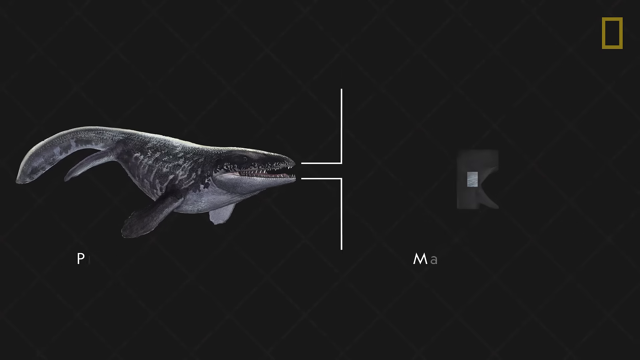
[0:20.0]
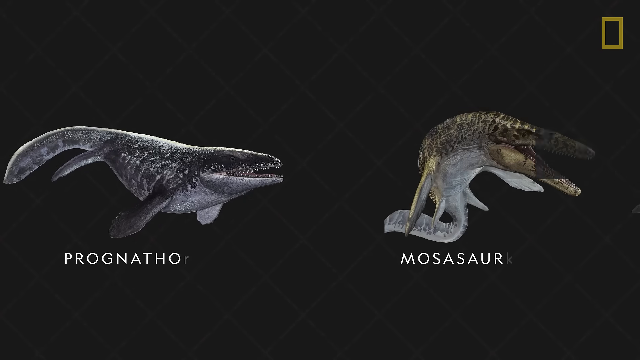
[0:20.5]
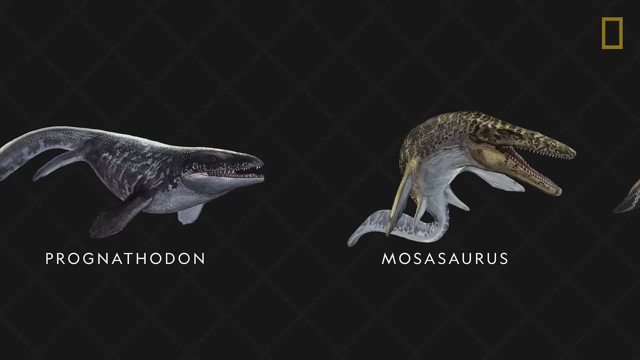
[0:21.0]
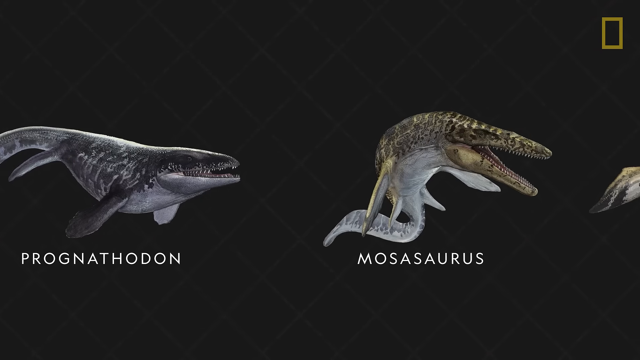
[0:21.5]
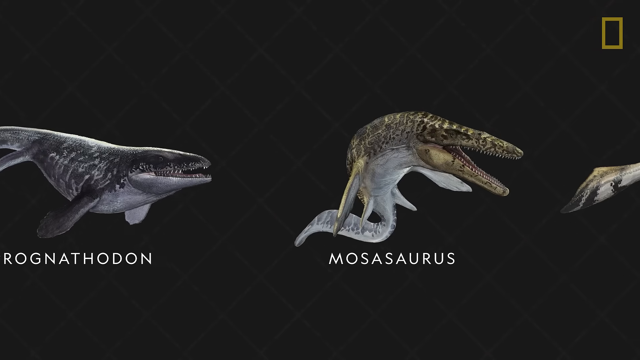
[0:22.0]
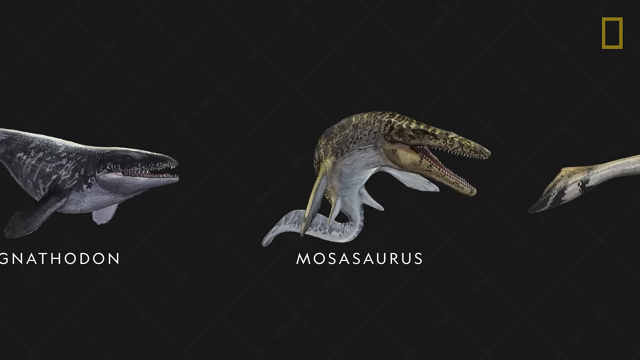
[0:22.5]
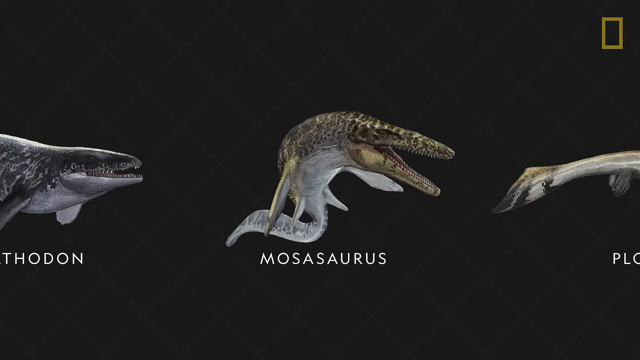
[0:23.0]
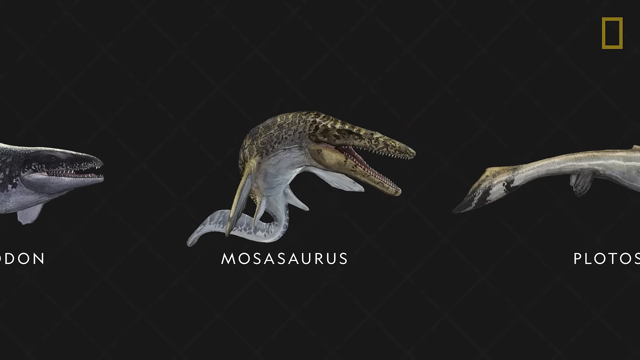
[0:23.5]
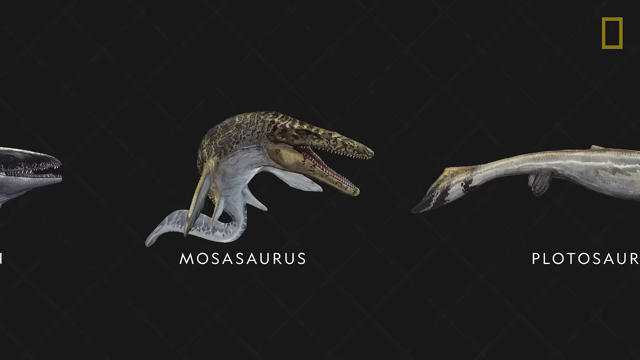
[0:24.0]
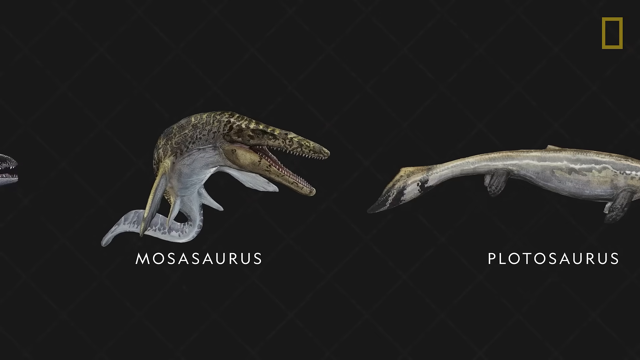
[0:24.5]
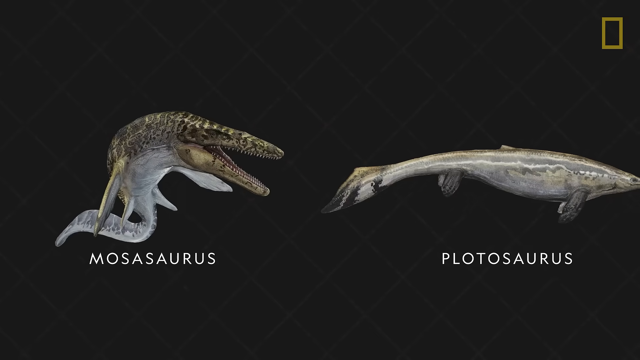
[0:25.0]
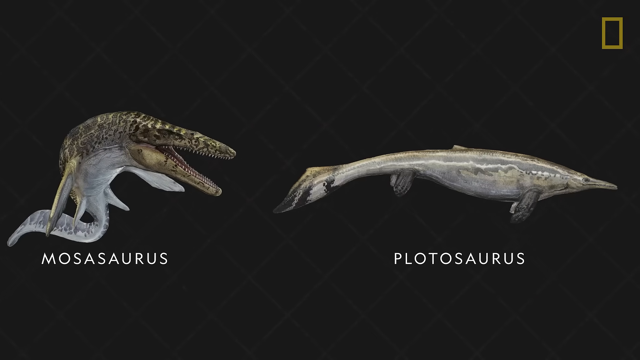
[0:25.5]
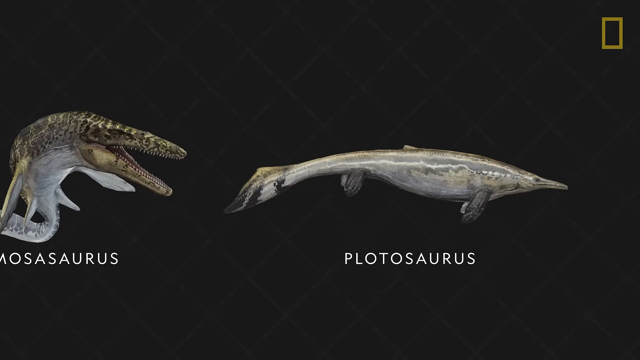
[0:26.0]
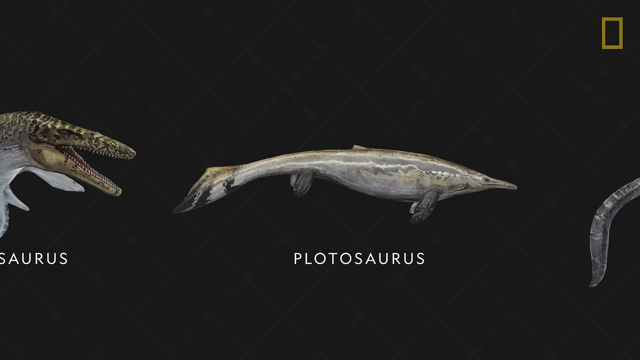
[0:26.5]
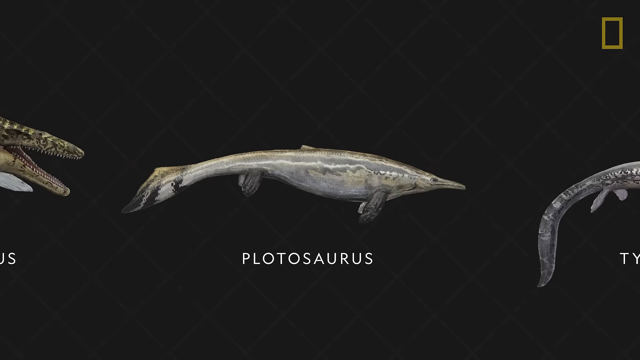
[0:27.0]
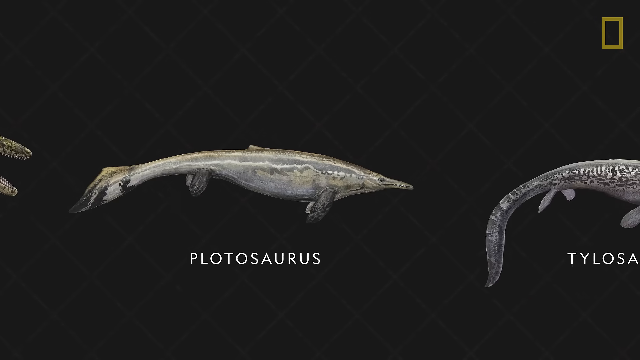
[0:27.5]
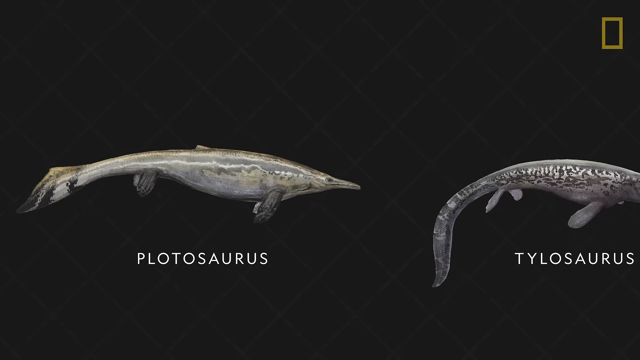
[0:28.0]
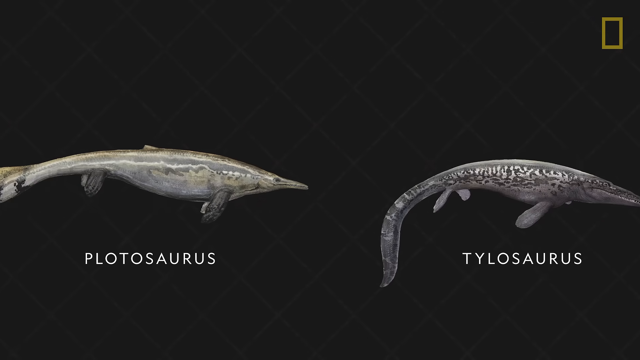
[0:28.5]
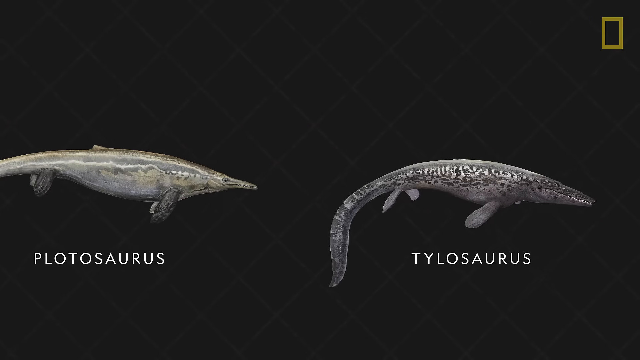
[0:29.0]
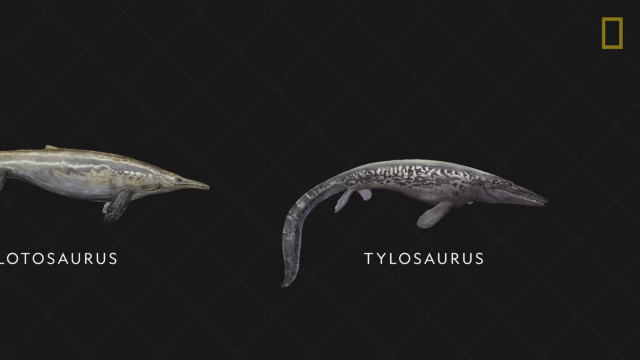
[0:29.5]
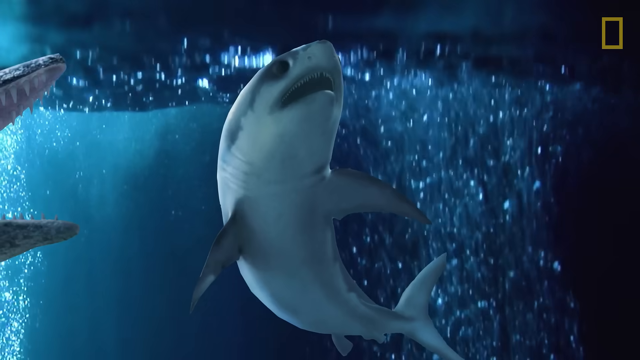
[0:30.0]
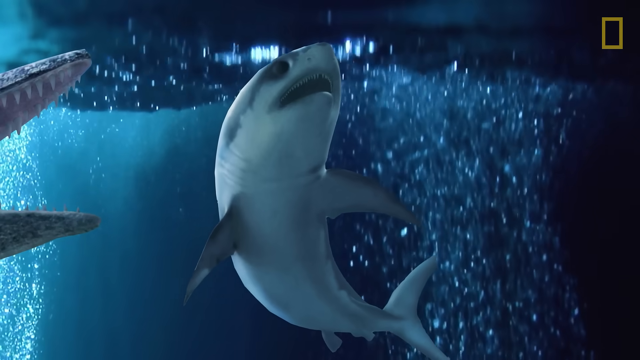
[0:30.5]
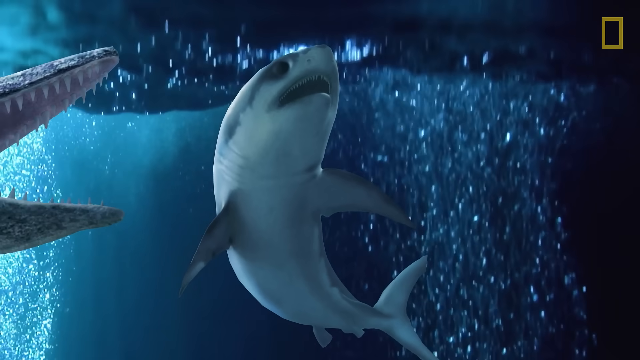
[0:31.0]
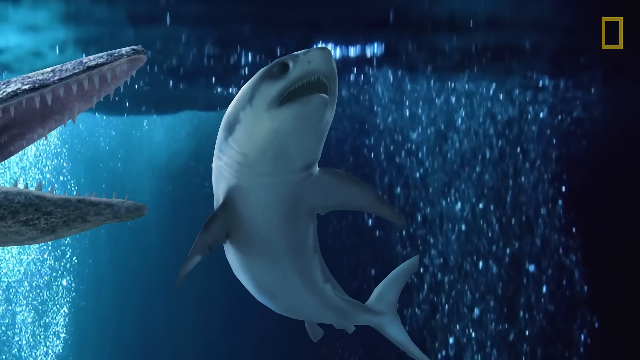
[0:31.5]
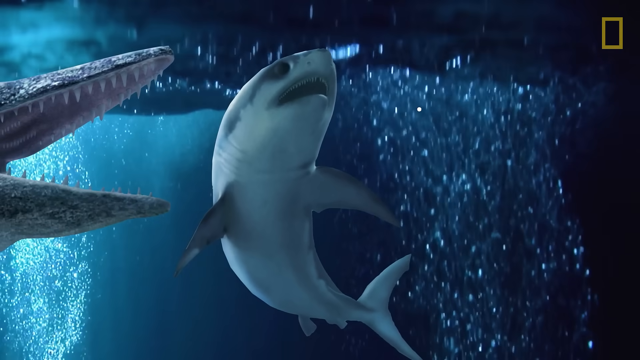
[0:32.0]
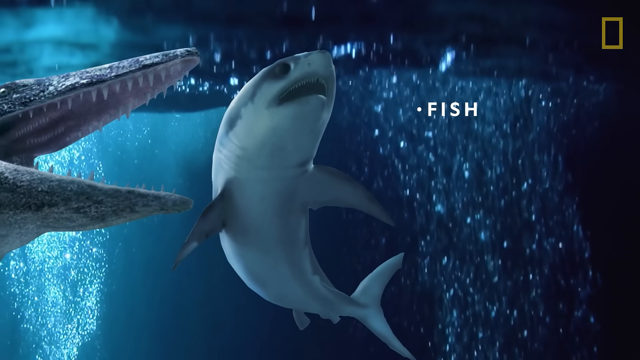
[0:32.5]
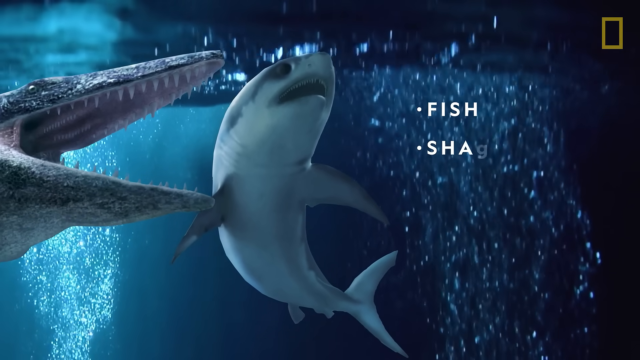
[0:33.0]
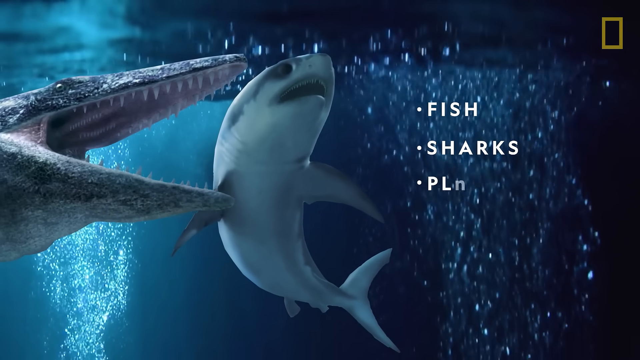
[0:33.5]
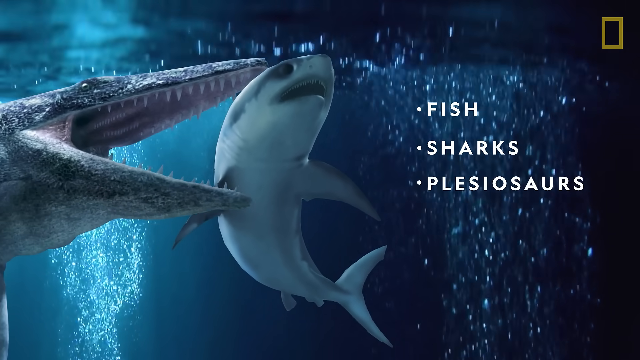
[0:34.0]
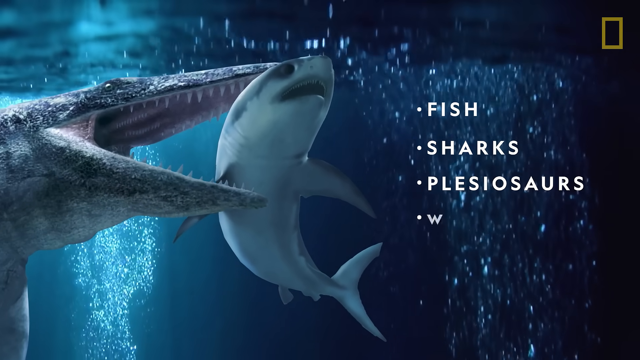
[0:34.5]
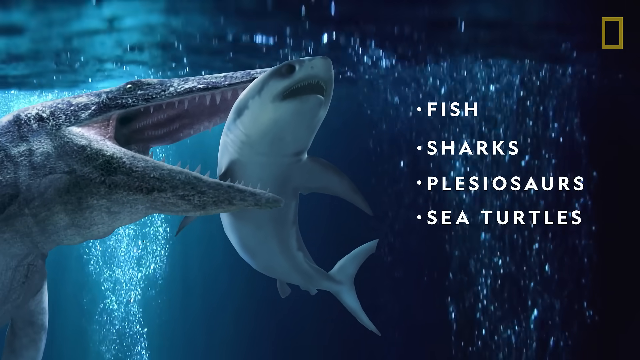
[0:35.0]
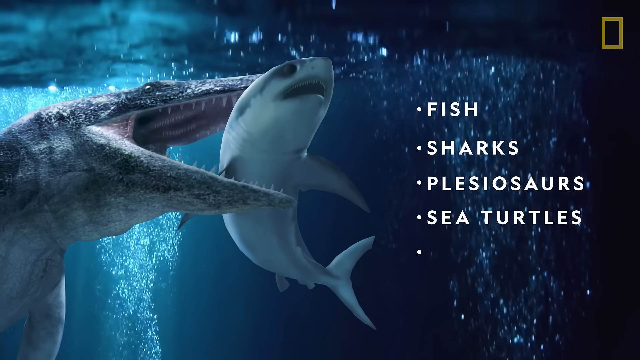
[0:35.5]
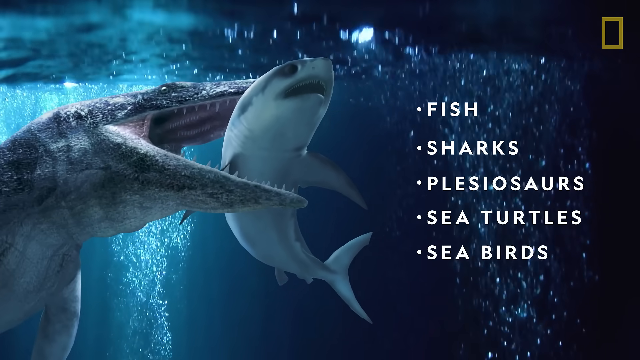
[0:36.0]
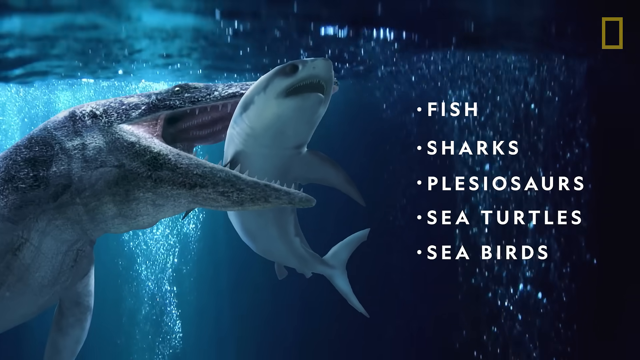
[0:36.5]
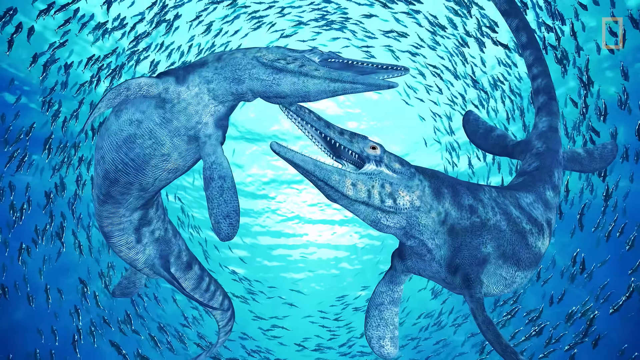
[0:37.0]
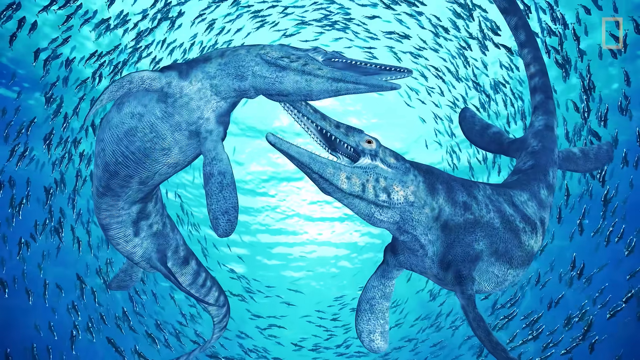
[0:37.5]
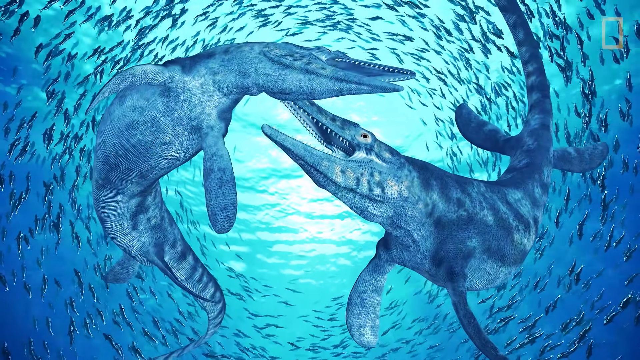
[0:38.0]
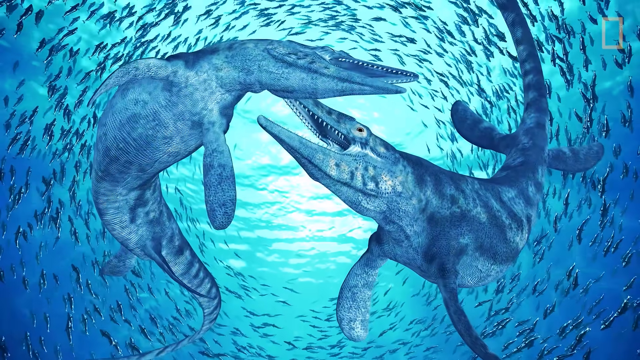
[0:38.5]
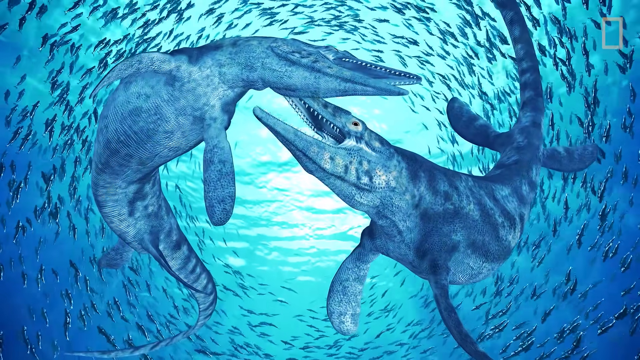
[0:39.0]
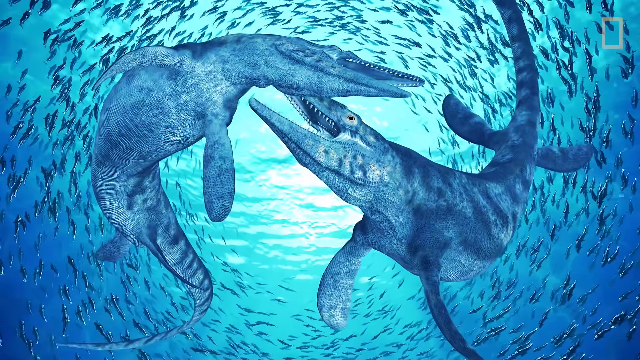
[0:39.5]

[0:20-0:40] The footage is taken underwater, seemingly by a person who is a very good swimmer. The day is very bright. Many fishes appear, including a Mosasaurus, along with other fish. All of them are large ocean fish. There is a fish, a shark, a plesiosaurus, a sea turtle, and many other sea animals.